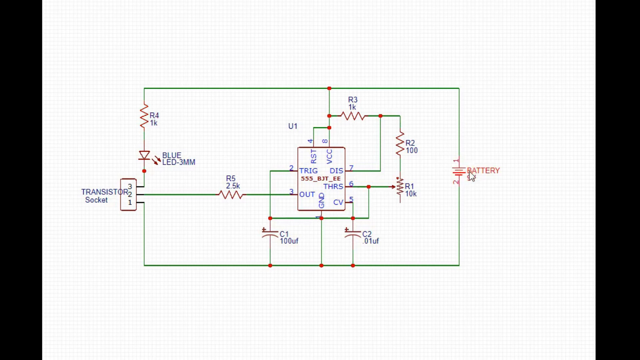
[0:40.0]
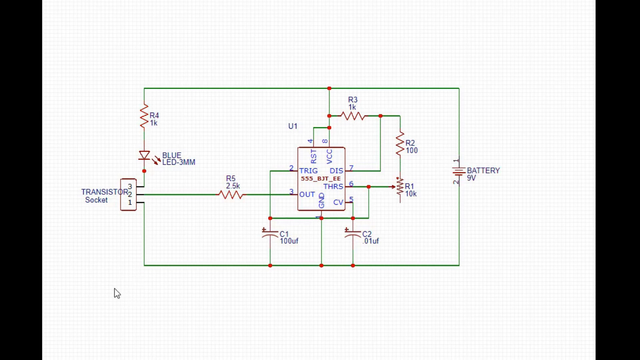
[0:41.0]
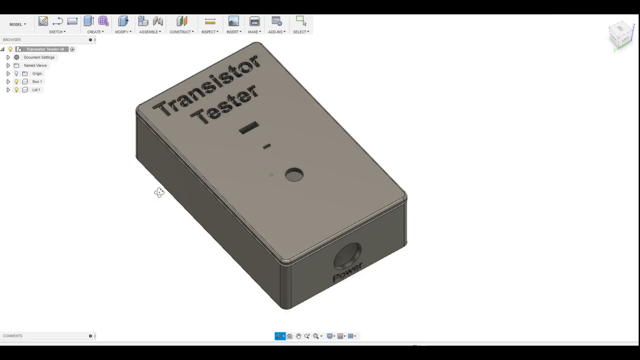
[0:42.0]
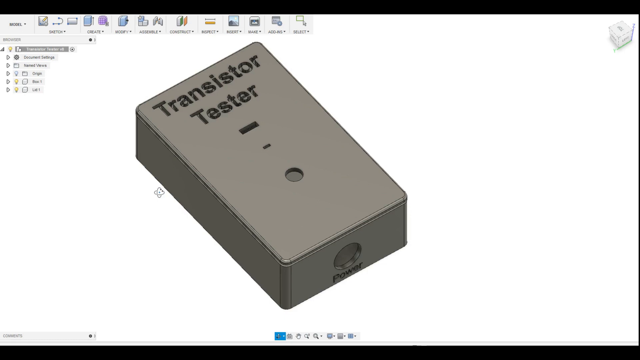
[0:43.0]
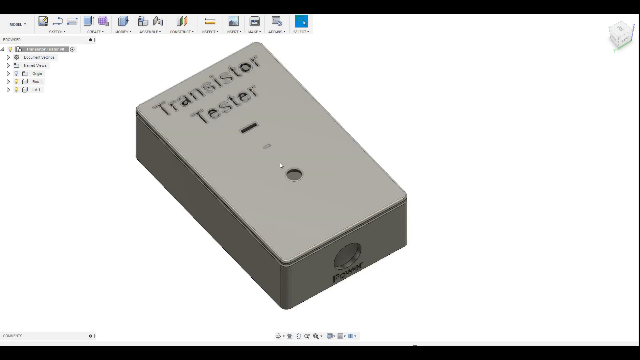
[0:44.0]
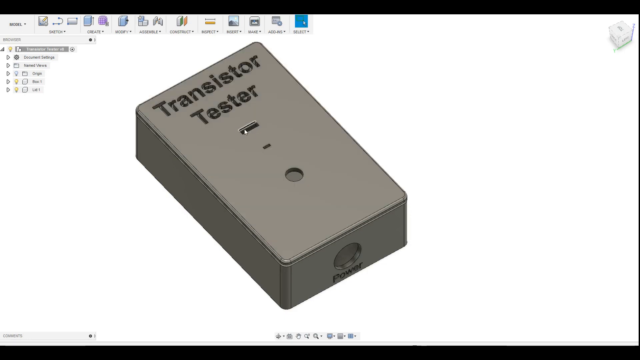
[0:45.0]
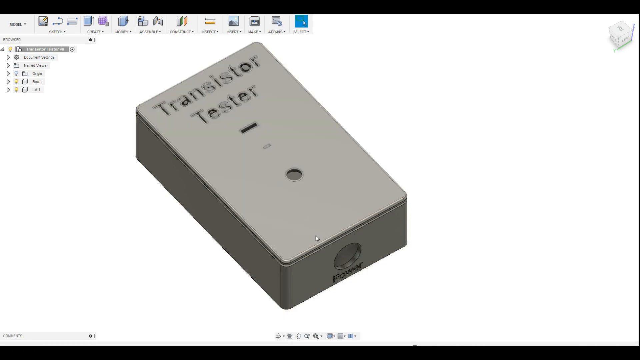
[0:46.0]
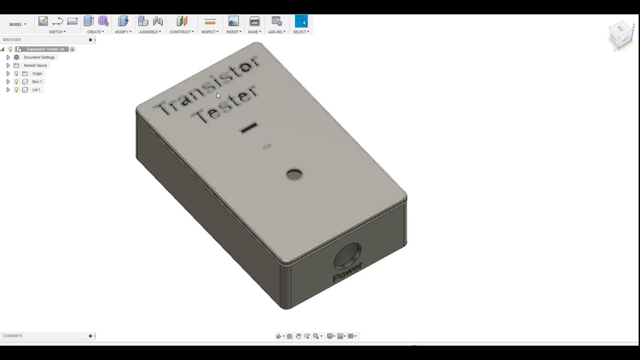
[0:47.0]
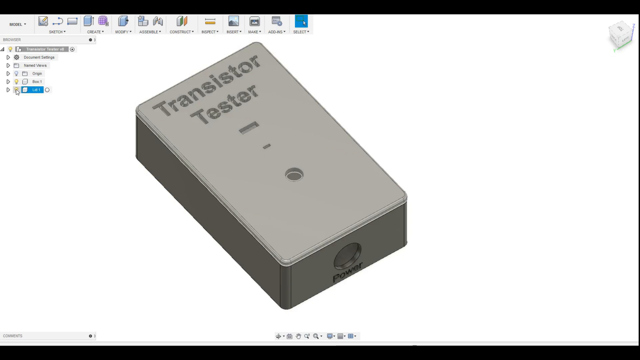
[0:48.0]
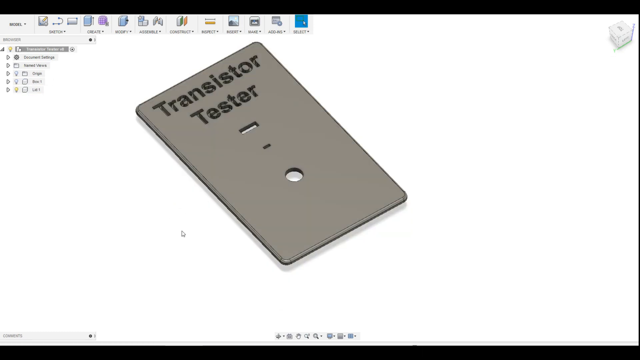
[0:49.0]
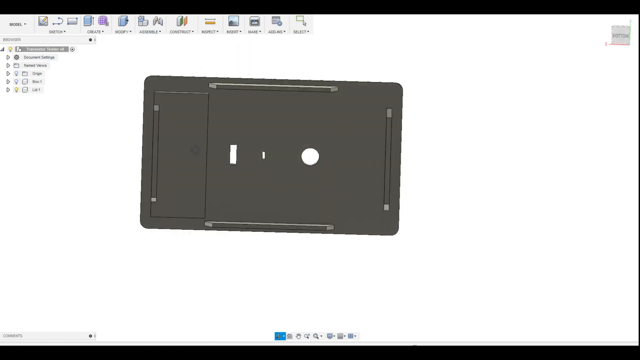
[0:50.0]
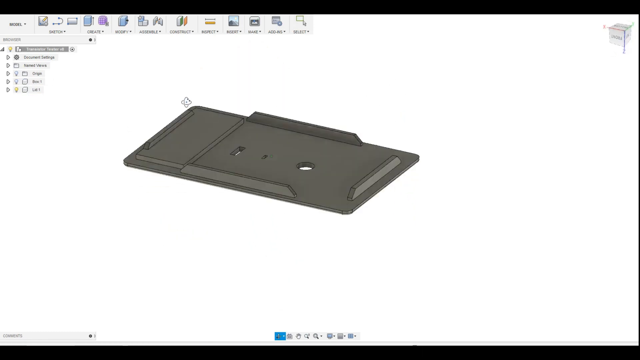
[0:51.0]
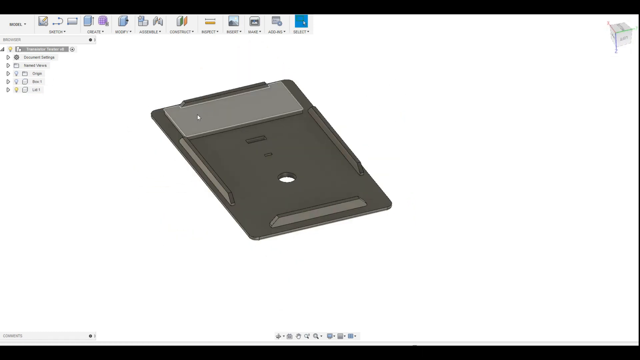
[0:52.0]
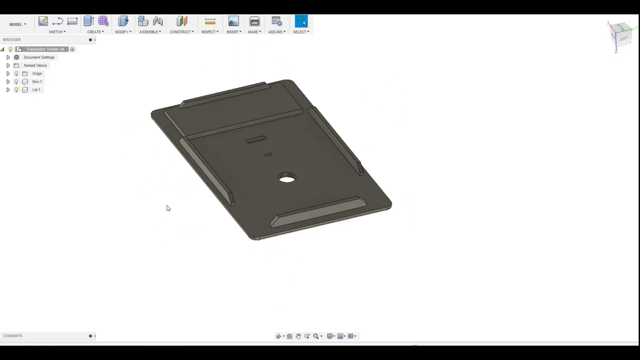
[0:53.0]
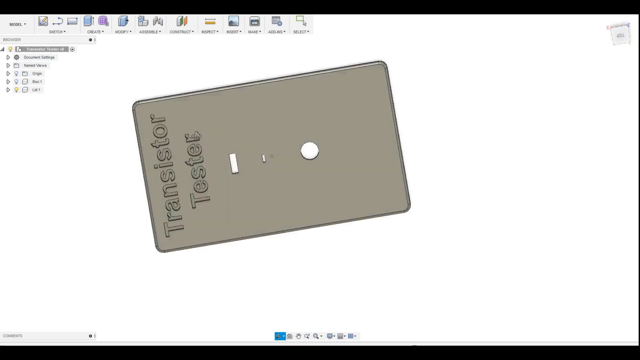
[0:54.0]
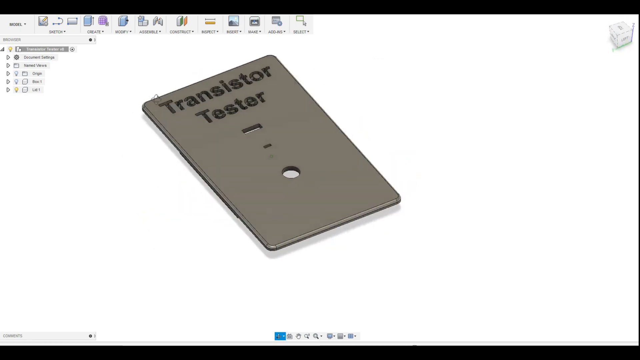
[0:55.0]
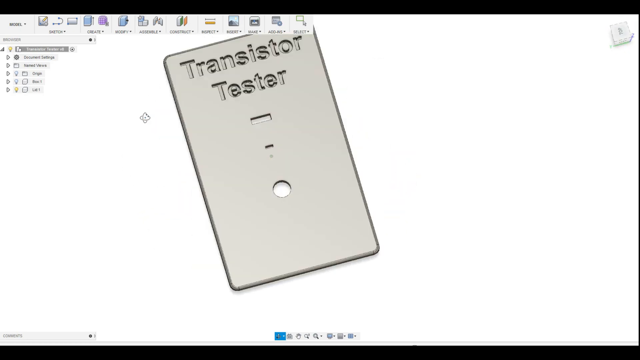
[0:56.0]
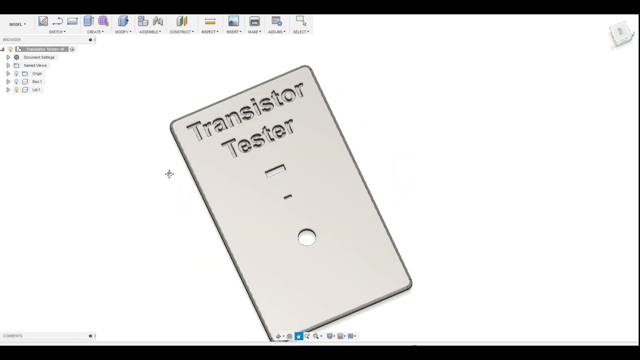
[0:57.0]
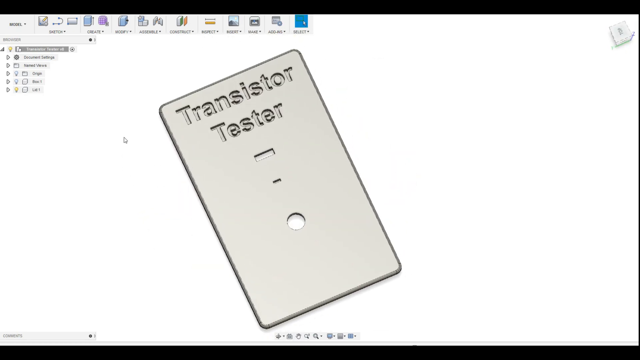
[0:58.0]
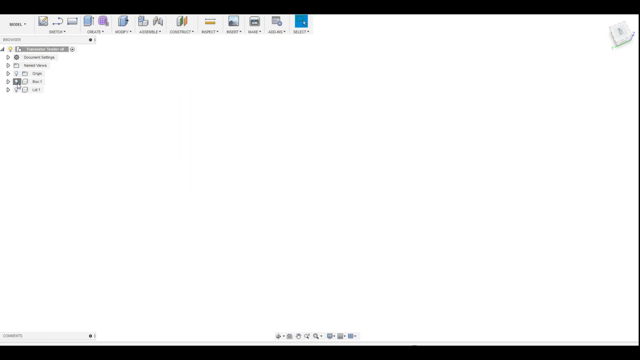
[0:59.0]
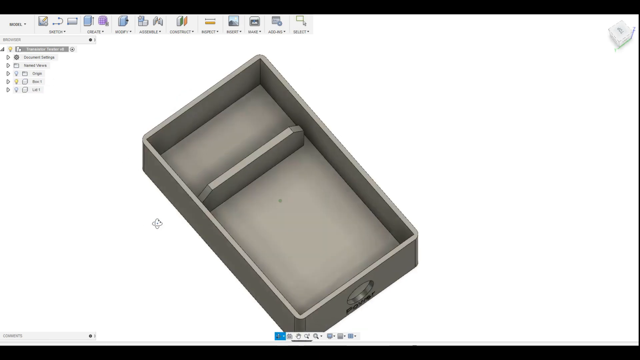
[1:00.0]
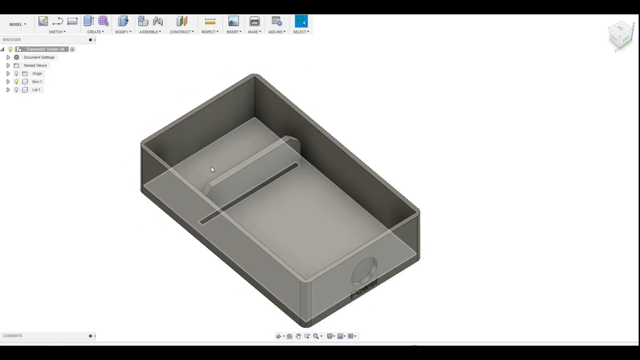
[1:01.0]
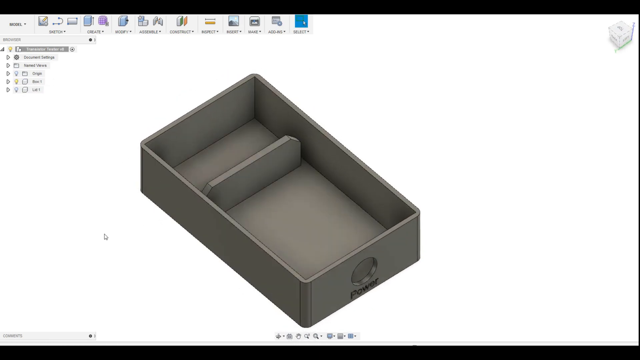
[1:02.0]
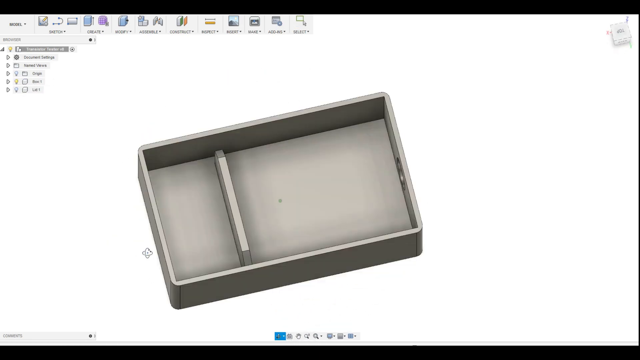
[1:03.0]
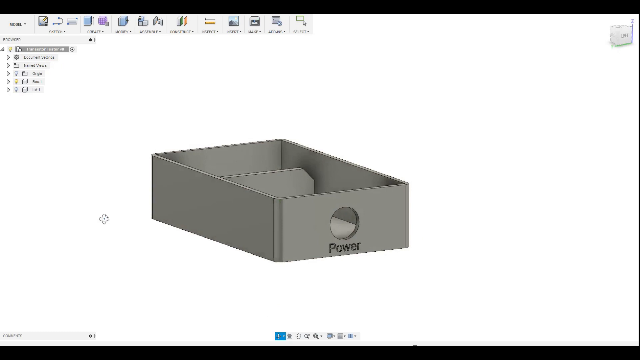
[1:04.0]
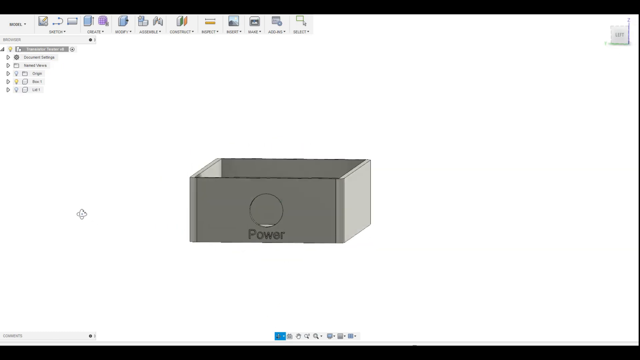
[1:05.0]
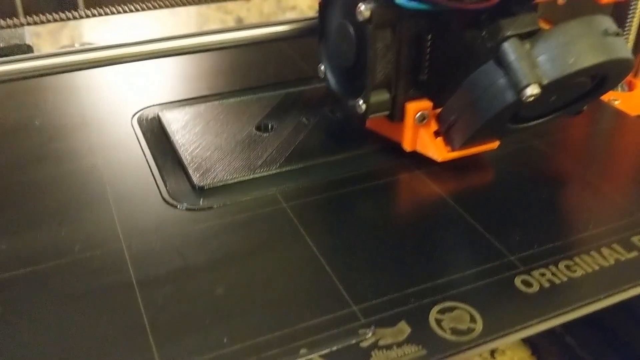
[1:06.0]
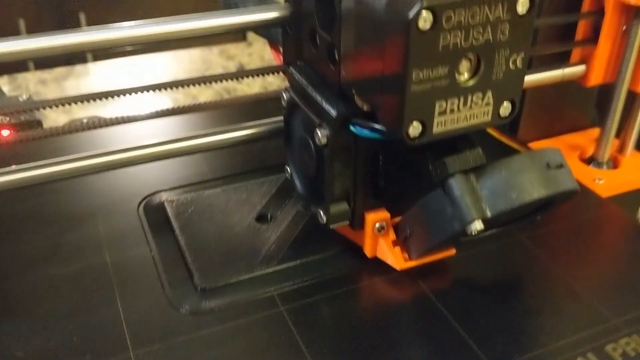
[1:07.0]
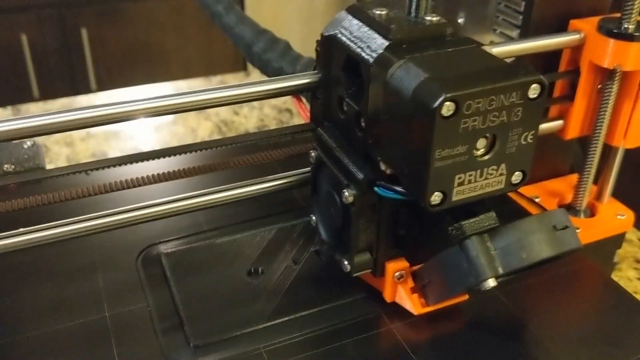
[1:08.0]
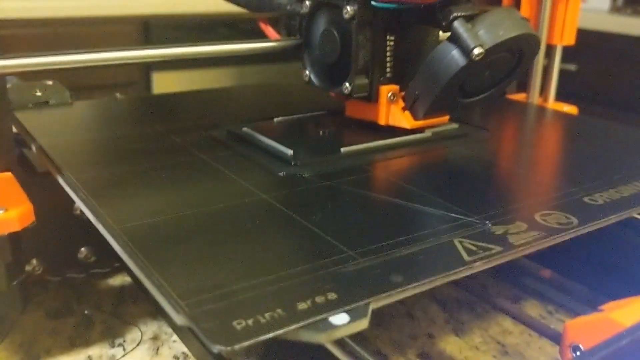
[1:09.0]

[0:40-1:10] A diagram shows what a transistor tester looks like. On the left side it says "transistor socket," with a 3, a 2 and a 1 in a rectangle in that section. Parts of the diagram are drawn in green, some in red, and there are blue labels describing the parts. Next, a diagram on a computer shows a rectangular prism that looks like a box and says "transistor tester"; it flashes a little. Someone uses a mouse to go over certain areas of it and turns it to show different angles of the lid, then moves the main box part as well. The word "power" appears at the end. Then a machine is shown cutting out and making the transistor testers in what seems to be a facility.